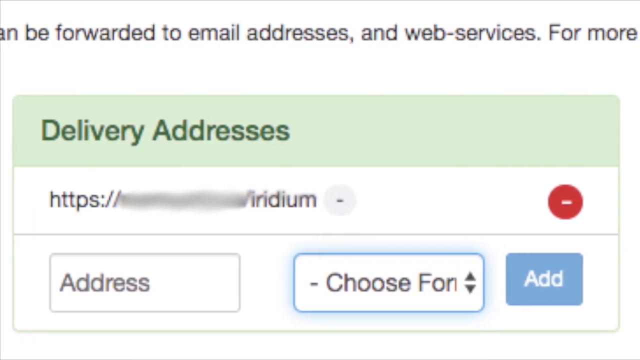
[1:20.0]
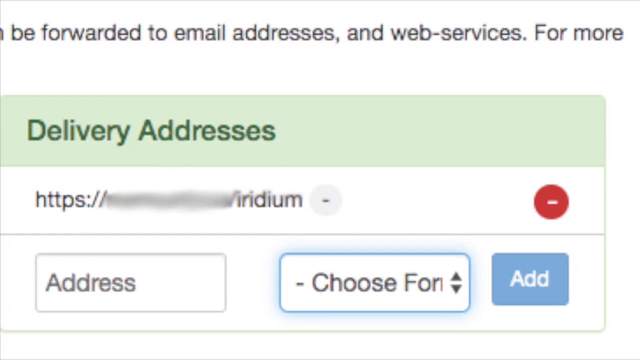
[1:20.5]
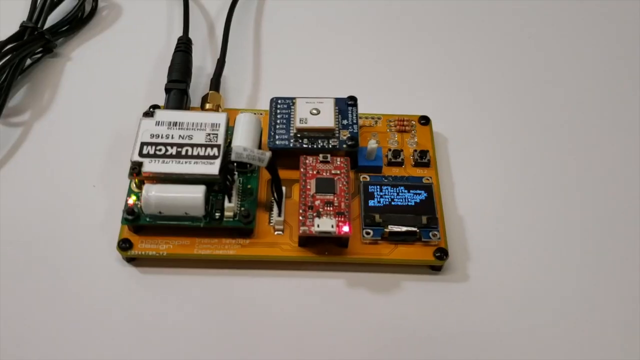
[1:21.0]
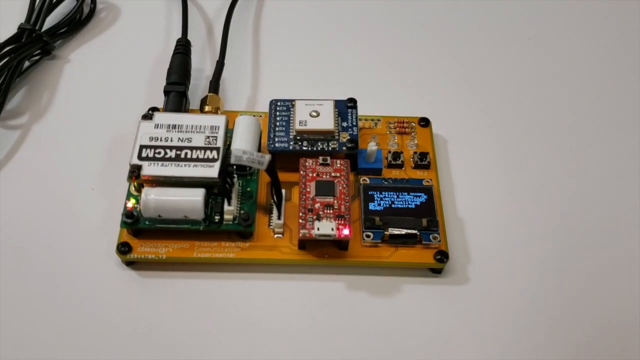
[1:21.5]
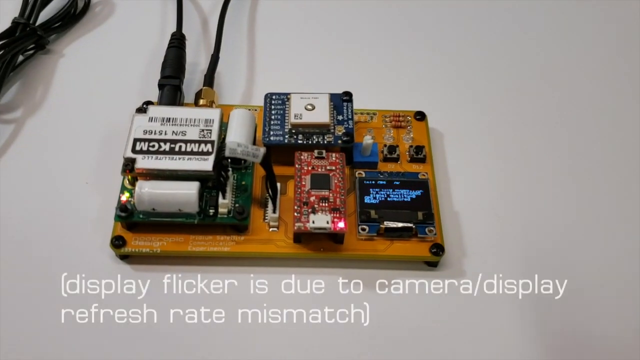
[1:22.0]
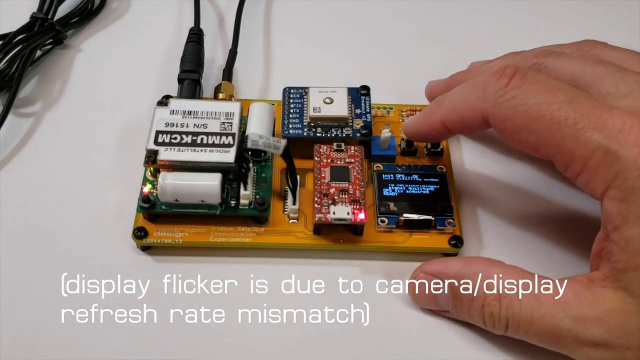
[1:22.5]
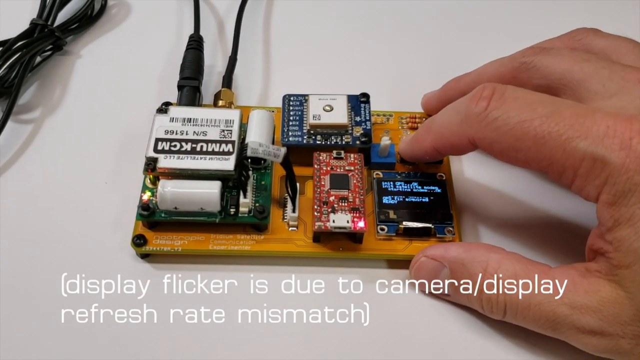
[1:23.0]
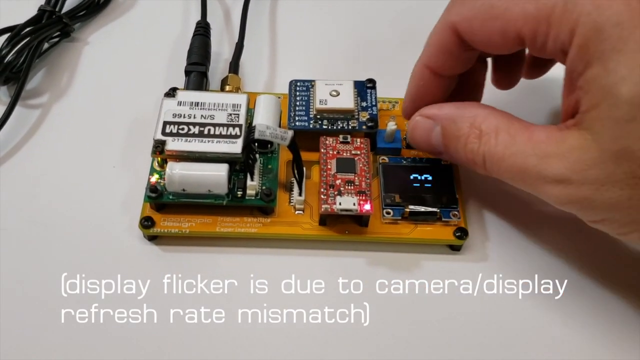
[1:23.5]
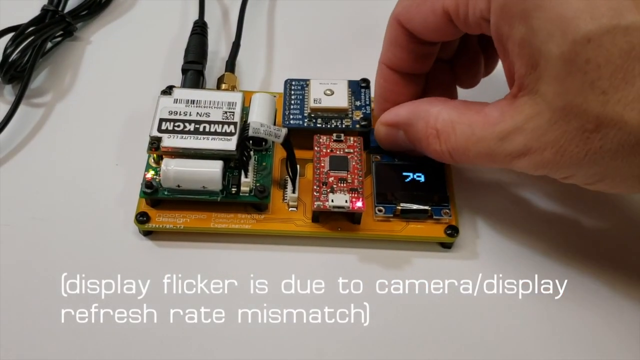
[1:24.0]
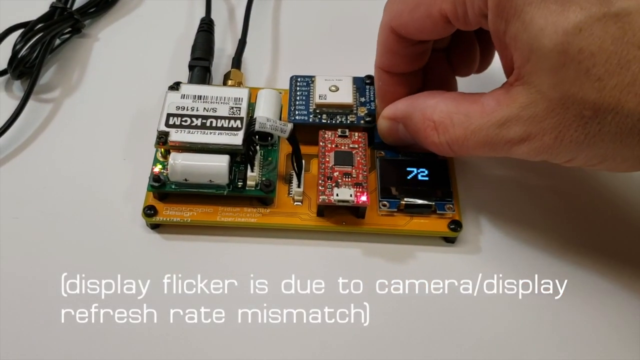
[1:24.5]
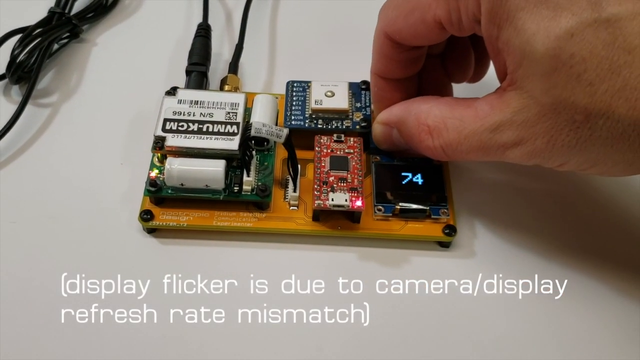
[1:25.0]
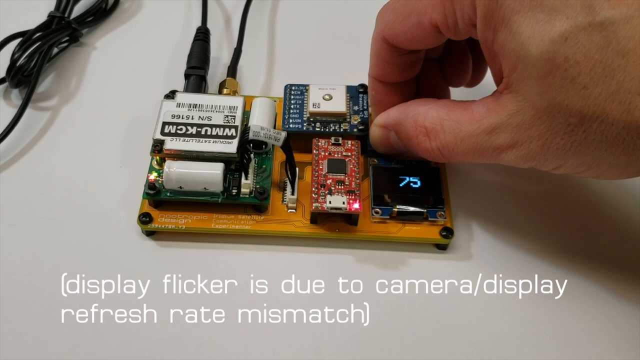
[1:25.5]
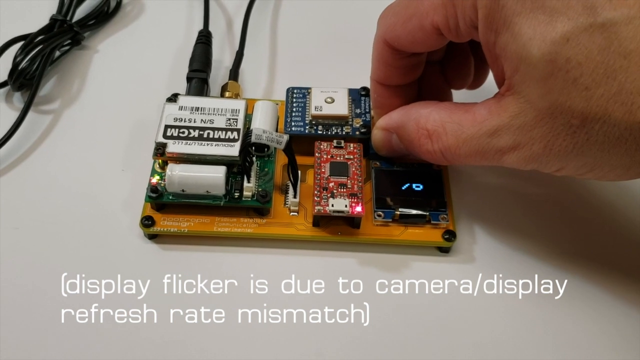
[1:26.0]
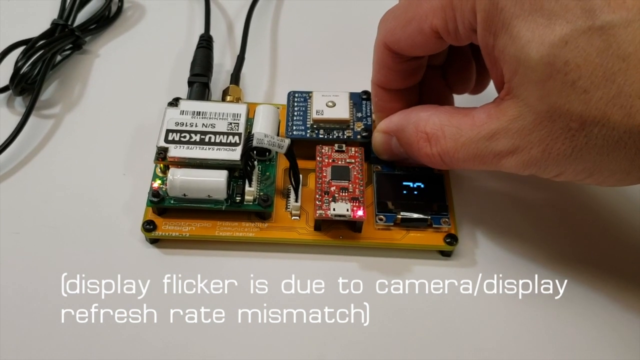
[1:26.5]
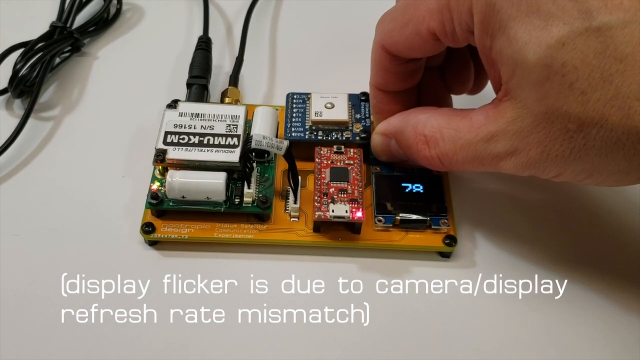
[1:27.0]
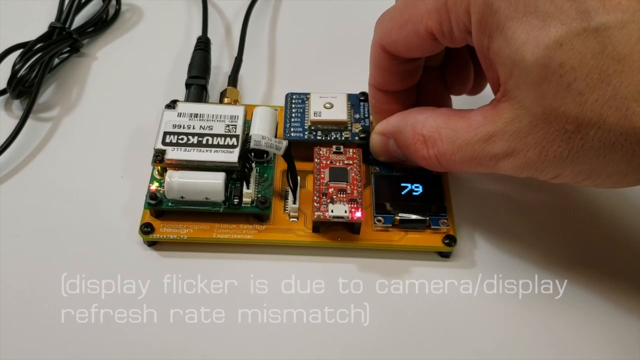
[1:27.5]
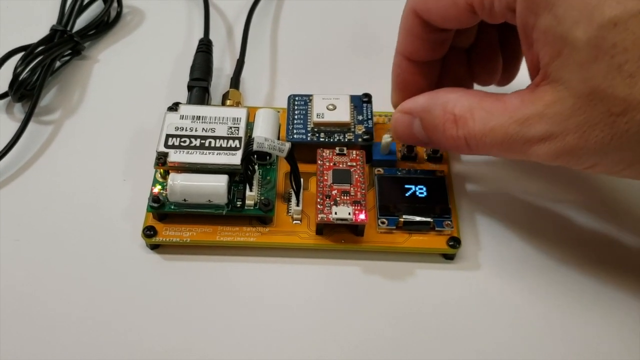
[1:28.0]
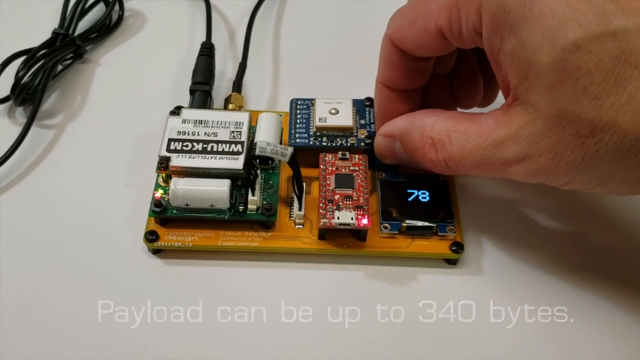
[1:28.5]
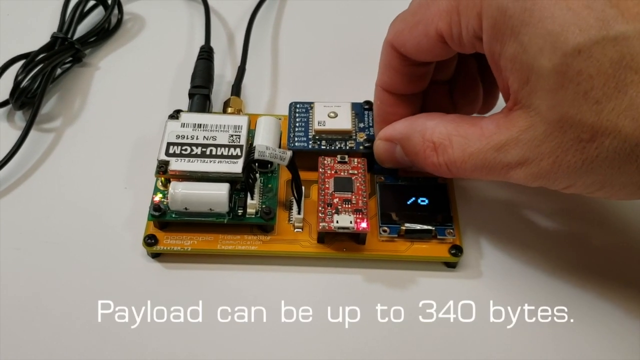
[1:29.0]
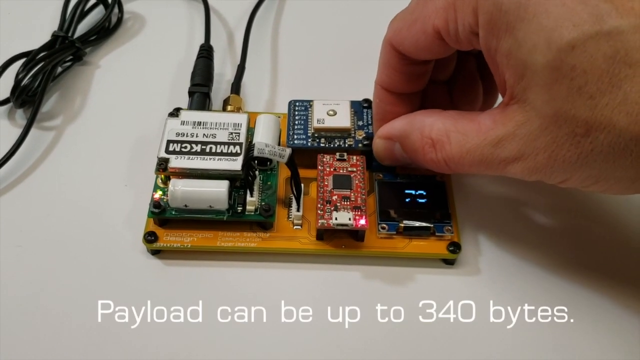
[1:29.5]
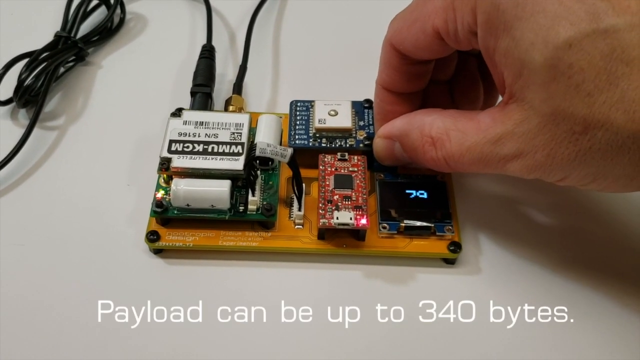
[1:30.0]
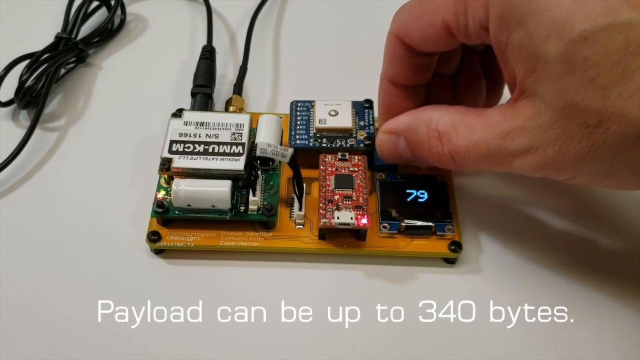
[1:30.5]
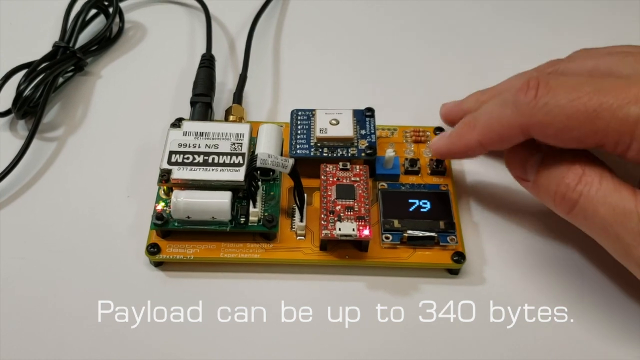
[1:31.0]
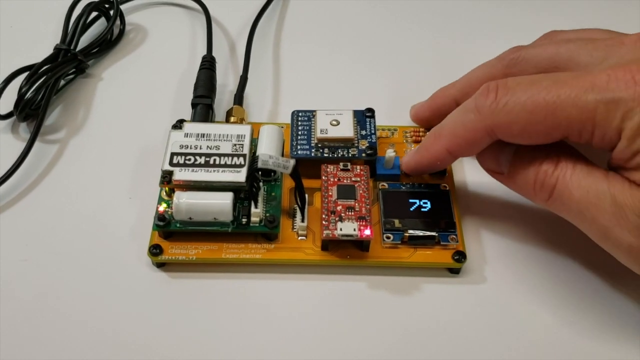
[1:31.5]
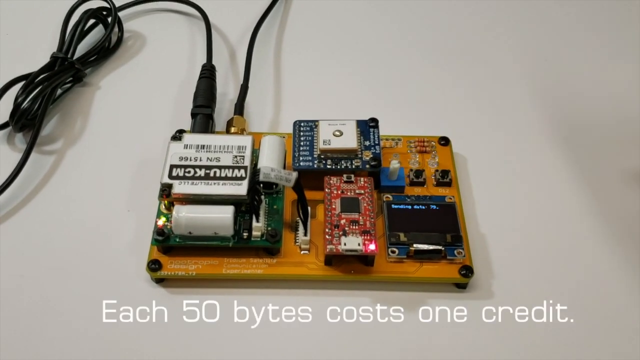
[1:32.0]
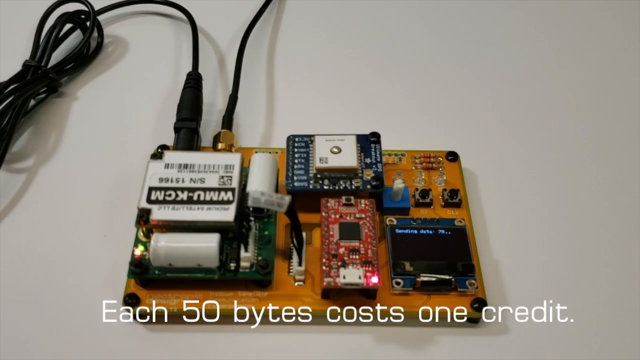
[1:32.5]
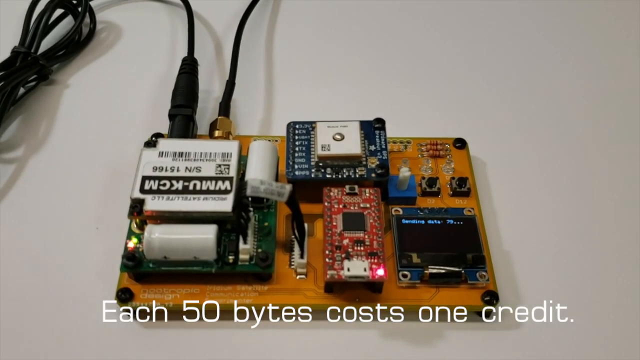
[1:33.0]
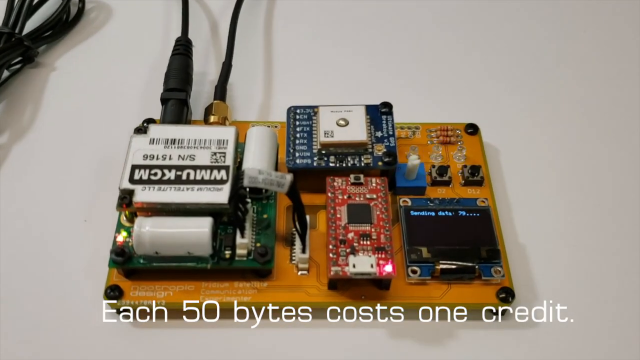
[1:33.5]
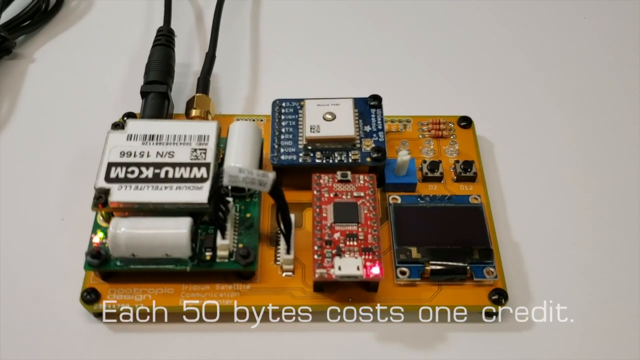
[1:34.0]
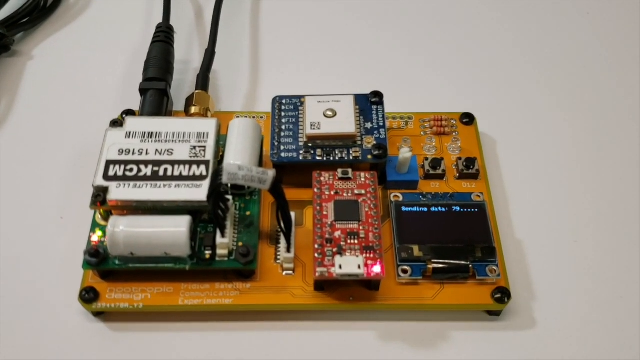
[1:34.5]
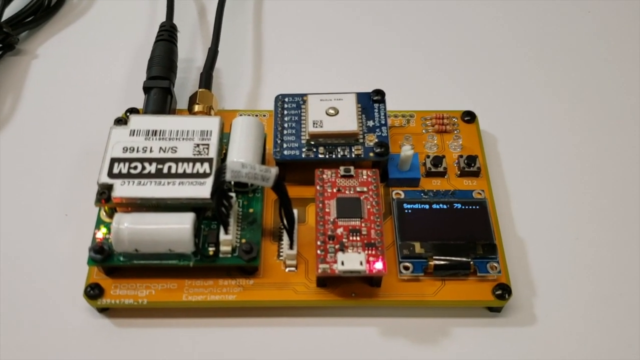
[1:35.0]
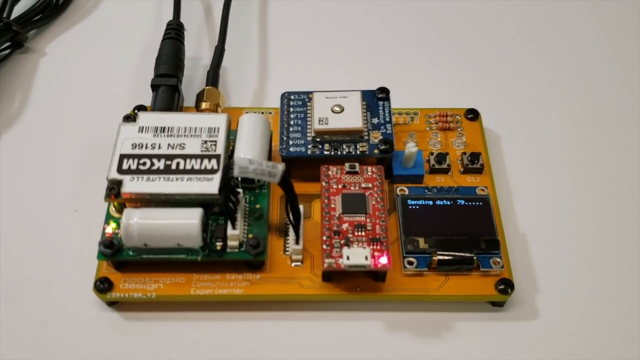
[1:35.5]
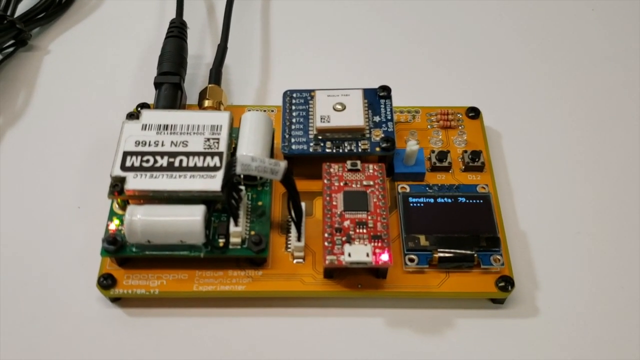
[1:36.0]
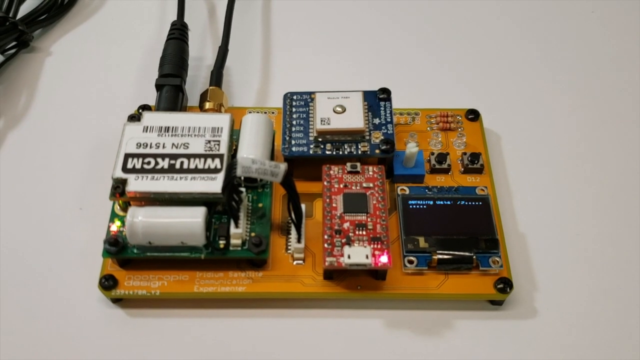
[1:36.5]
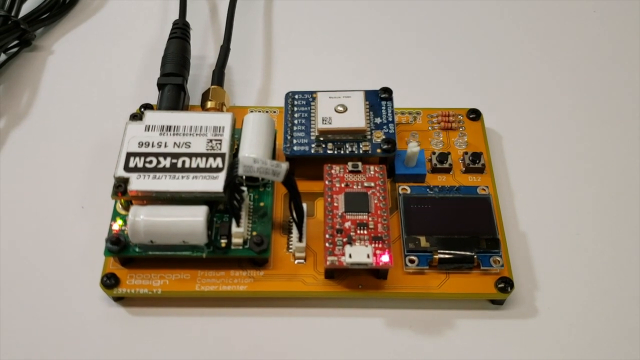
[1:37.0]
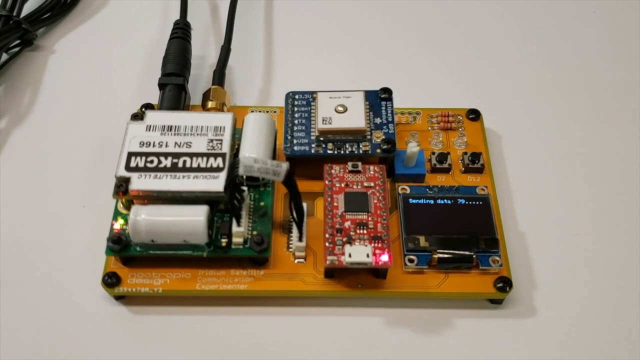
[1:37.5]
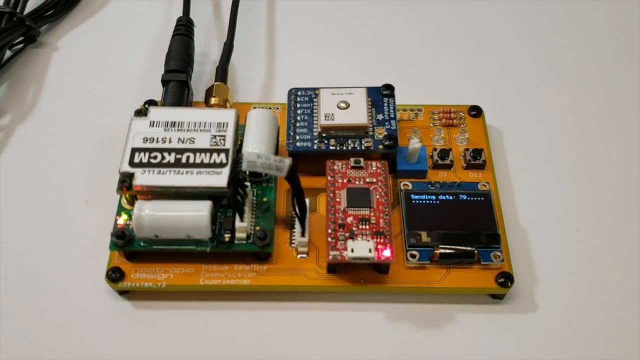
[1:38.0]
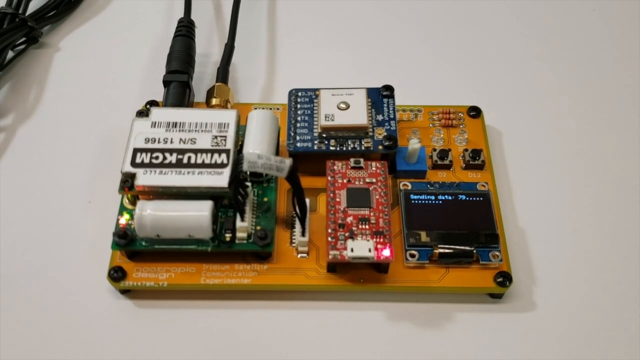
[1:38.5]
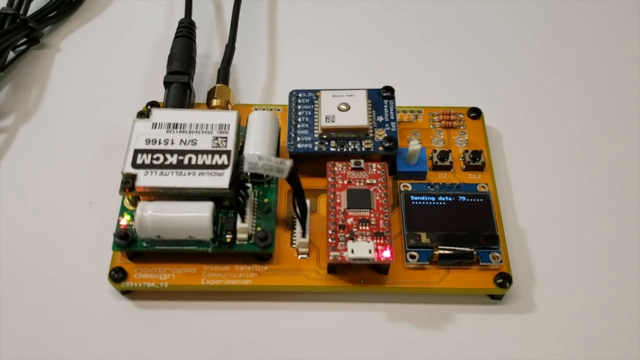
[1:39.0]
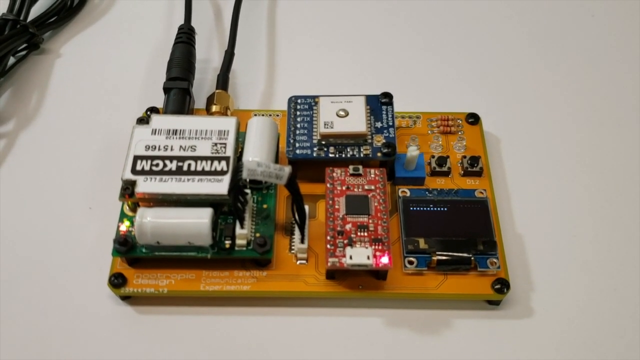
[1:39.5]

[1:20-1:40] On the side with the delivery address, part of a sentence runs across the top. On a white background with a light green border, dark green text says "delivery address," along with an HTTPS address that is half blurred out. On the right side is the red circle with the white dash. On the left is the area for entering an address, to its right a box for choosing font, and then a blue button that says "add" in white. The video then goes to a forward, kind of overhead shot of the box with the components on it, on a white background, with cords going up off the top and a bunch of cords bundled up in the top left corner. In the bottom right is a screen with blue lettering. A hand comes in from the right side, showing the back of the fingers, the side of the thumb and a little of the webbing between finger and hand, and goes to the box in the bottom left corner. They push a button, which changes the screen to the number 79 as information scrolls across the bottom. They then change the number, moving it up and down, going down to 71 and back up to 79 as more white text comes down. The finger then presses a button above it, and a blue light starts flashing above it. The camera zooms in a little, showing "sending data 79" on the small box in the bottom right corner, which is flashing blue.